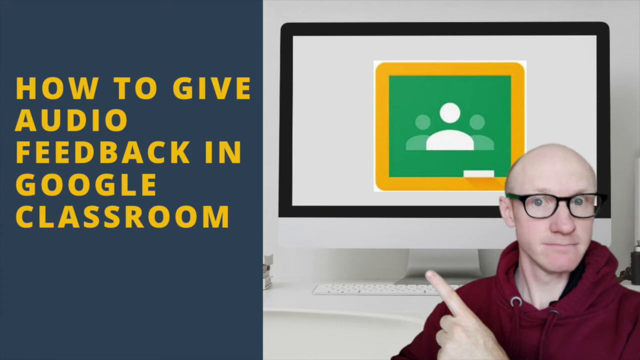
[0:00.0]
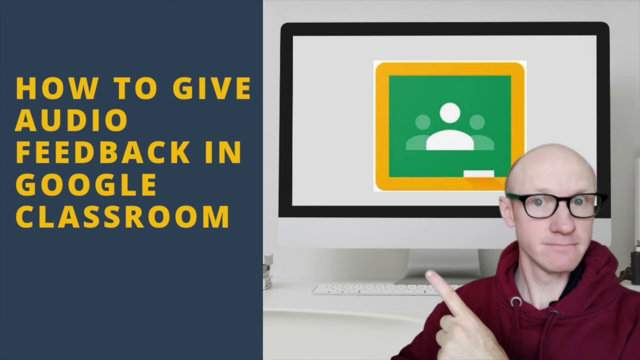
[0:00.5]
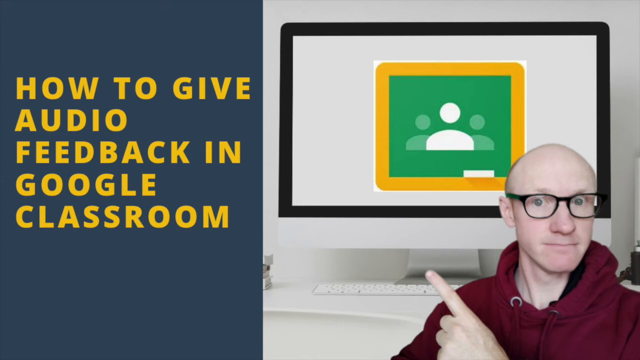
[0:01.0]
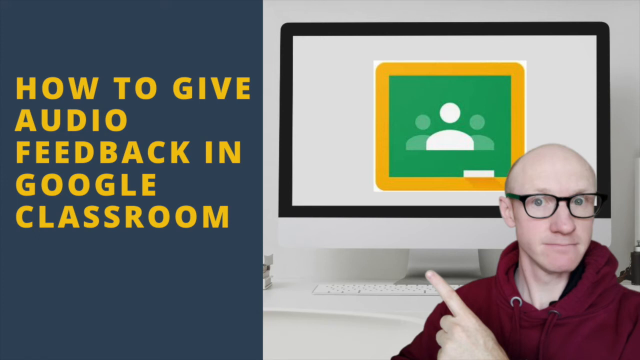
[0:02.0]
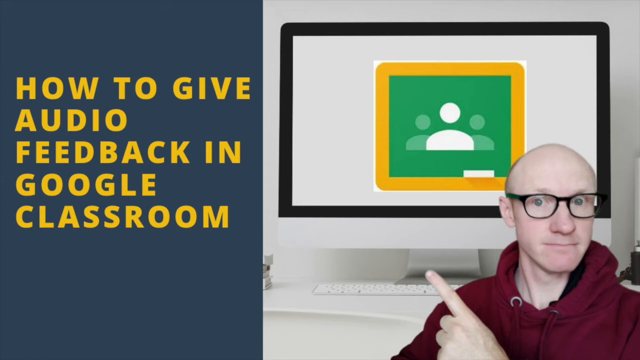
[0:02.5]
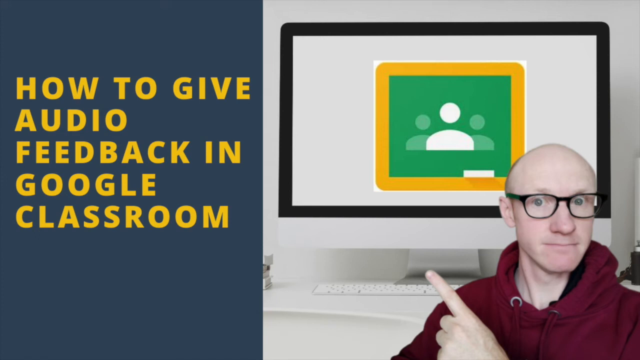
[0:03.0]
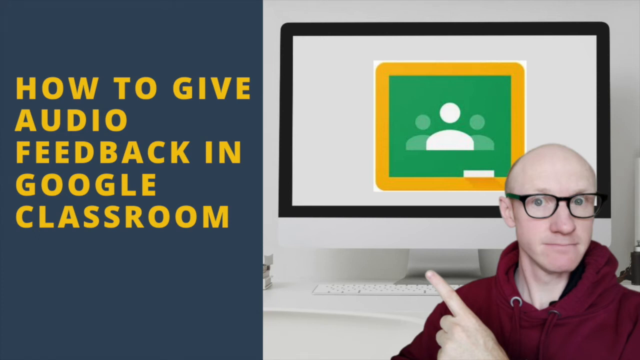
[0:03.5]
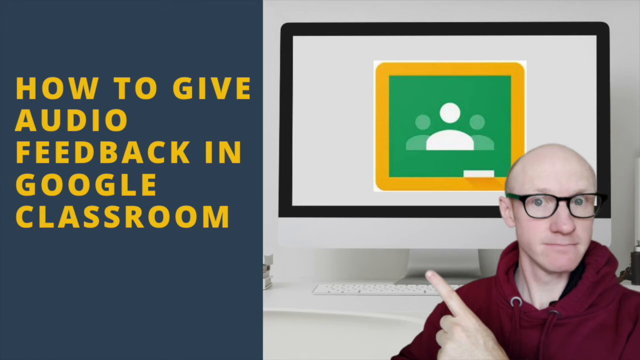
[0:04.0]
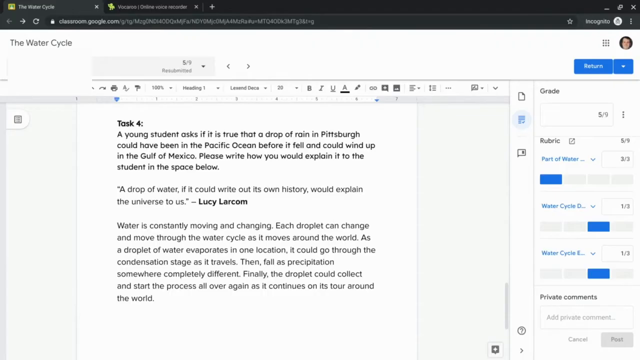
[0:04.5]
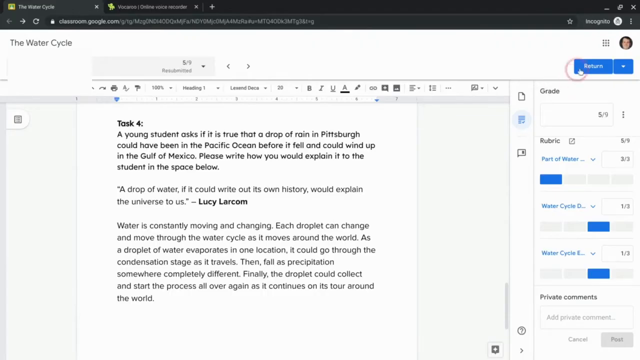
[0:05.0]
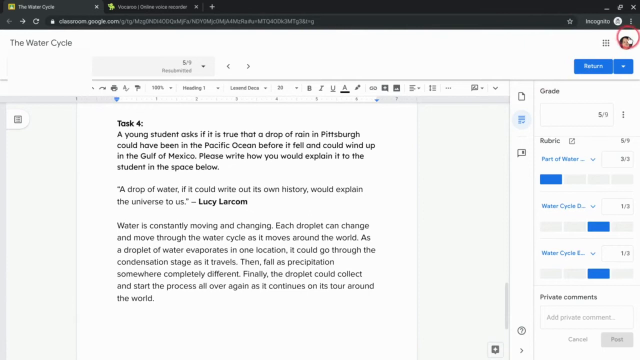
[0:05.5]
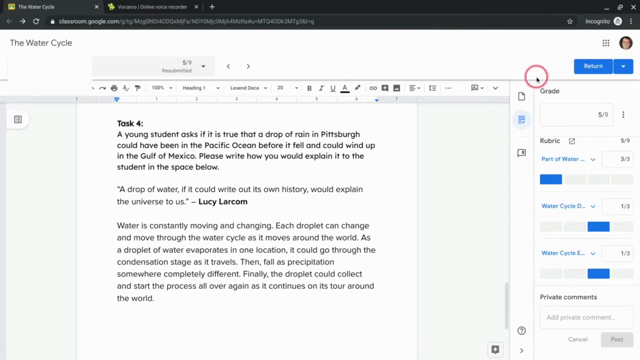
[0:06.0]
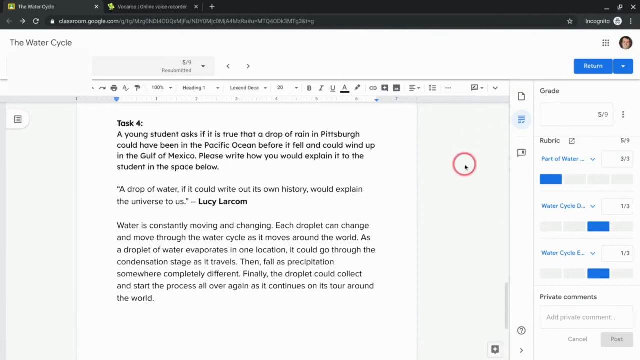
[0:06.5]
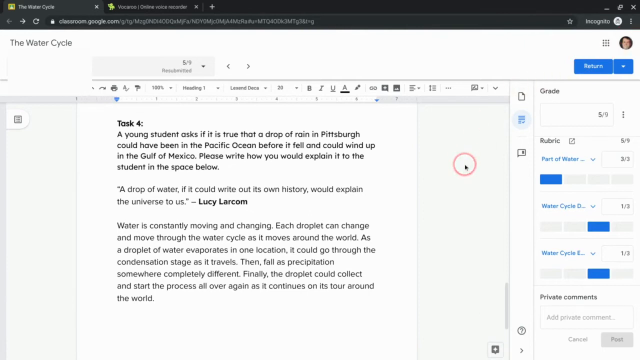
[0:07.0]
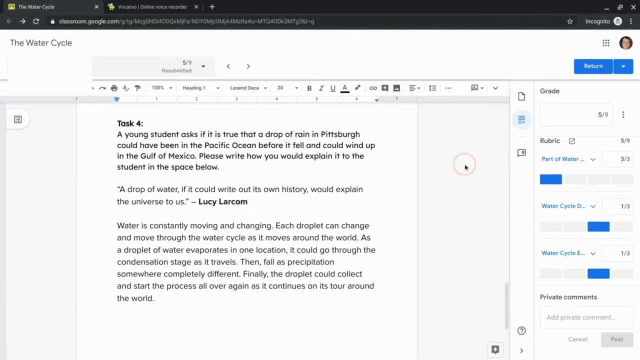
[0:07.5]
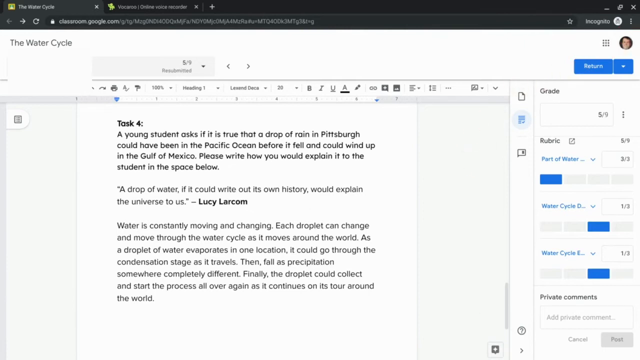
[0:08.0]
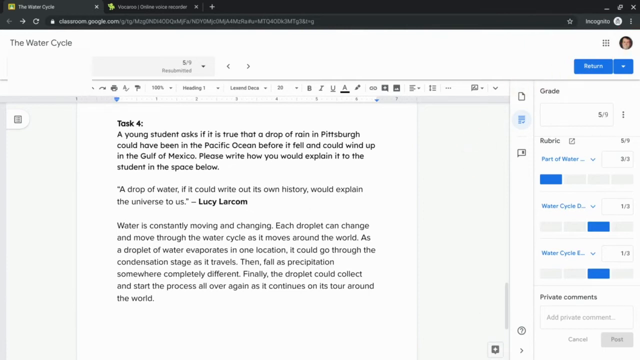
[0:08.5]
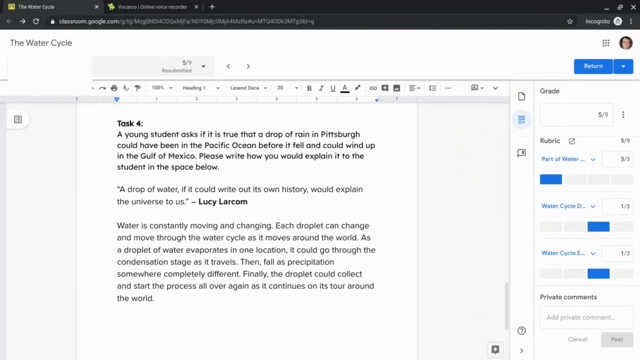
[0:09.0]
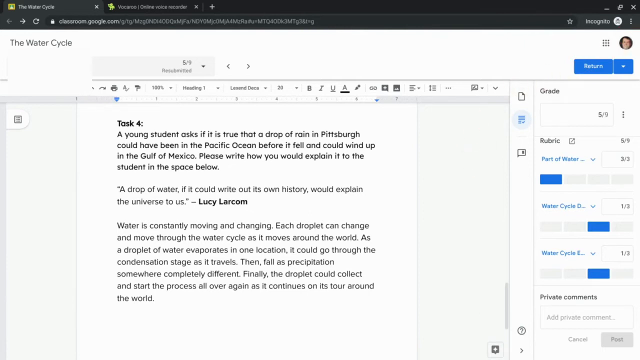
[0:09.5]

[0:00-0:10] The video opens on a static image: a bald man with glasses and blue eyes in the bottom right of the screen points at the image above him. That image is a computer screen with a blue, green and yellow icon in the middle, taking up most of the space on the screen. On the left side of the screen, large yellow text reads "How to give audio feedback in Google Classroom." Next, a text editor with a document appears. A mouse cursor with a red circle around it moves around the screen, goes up to the icon at the top right, and then moves down across the screen.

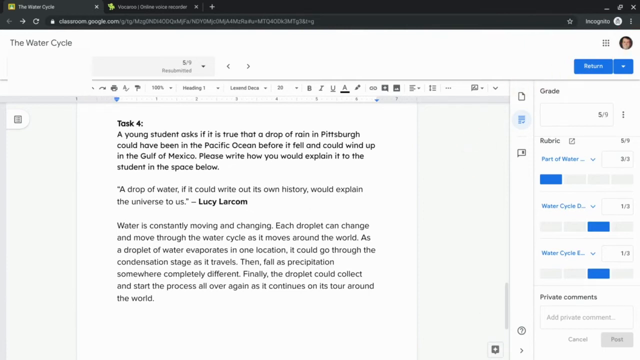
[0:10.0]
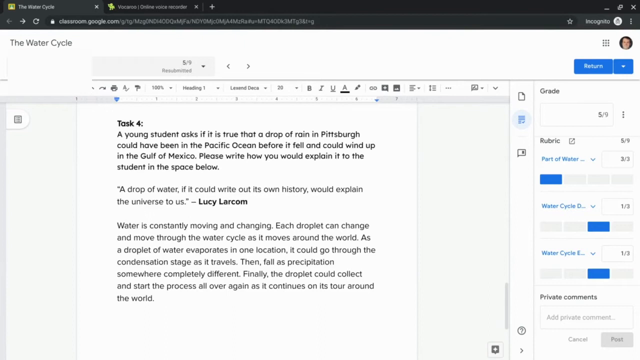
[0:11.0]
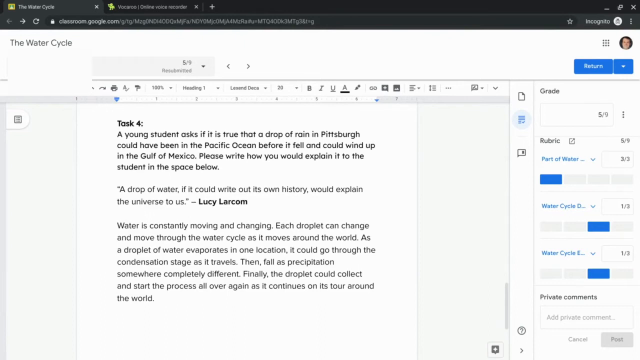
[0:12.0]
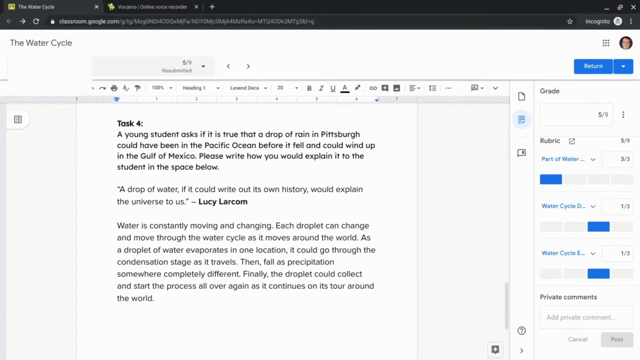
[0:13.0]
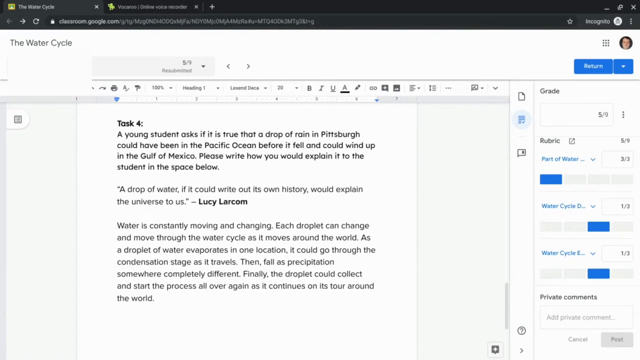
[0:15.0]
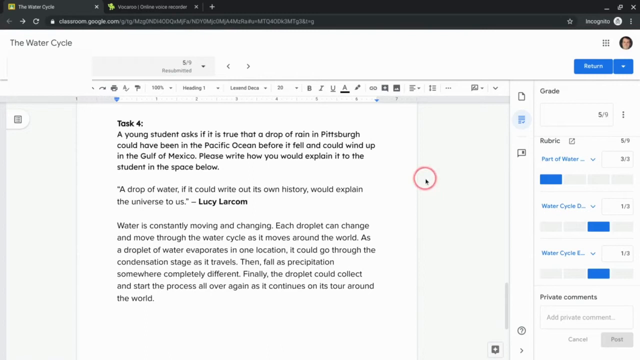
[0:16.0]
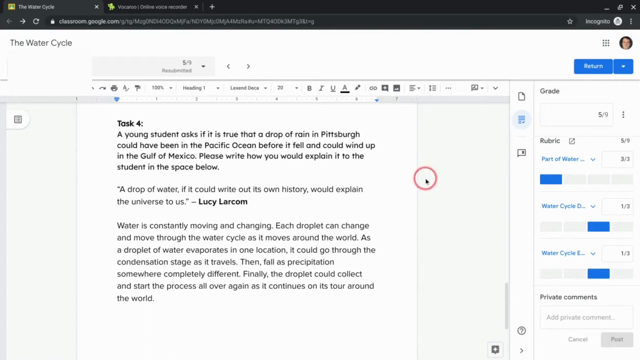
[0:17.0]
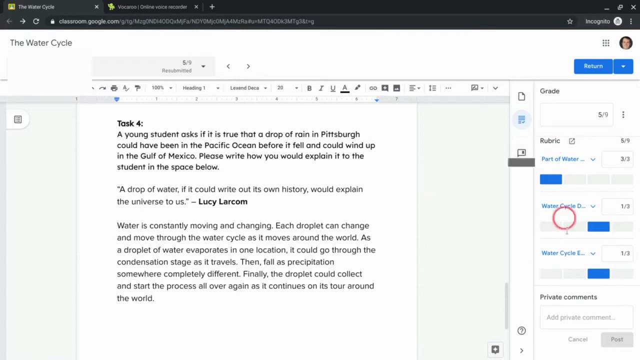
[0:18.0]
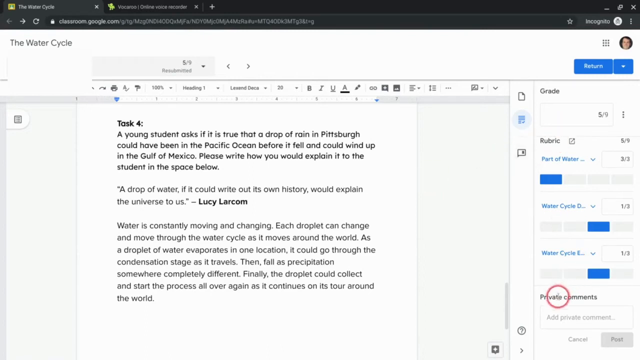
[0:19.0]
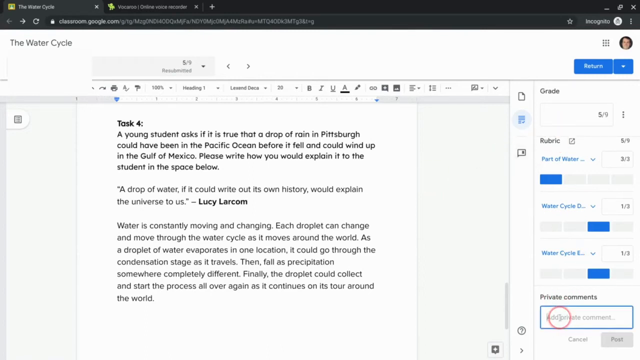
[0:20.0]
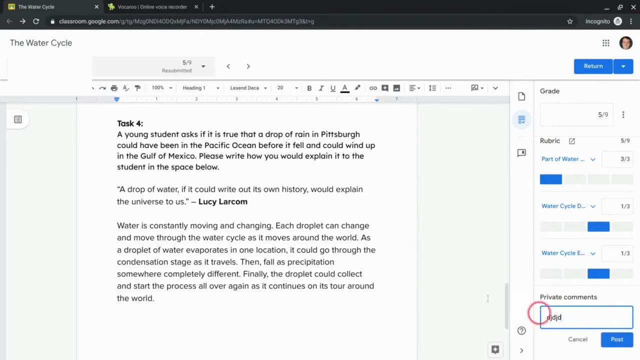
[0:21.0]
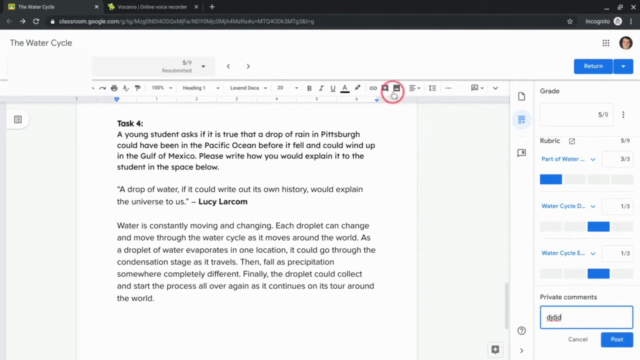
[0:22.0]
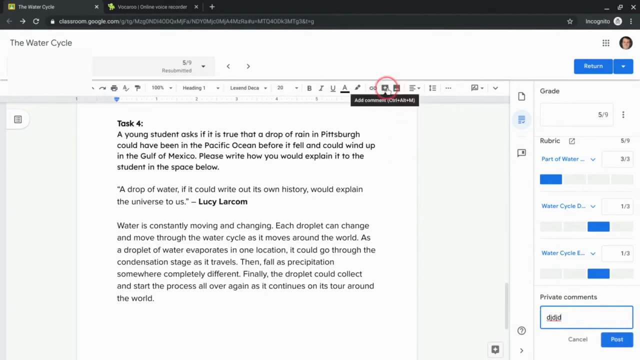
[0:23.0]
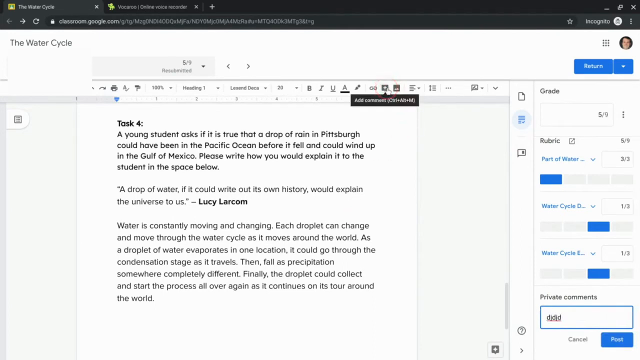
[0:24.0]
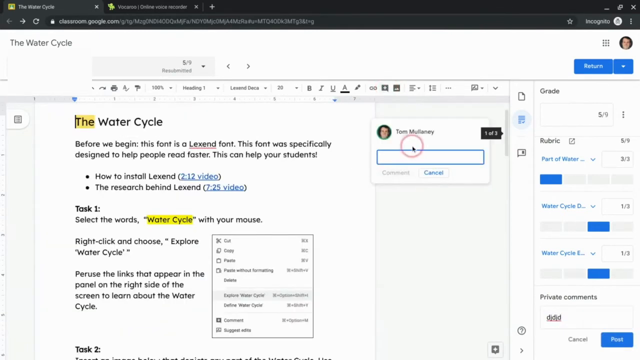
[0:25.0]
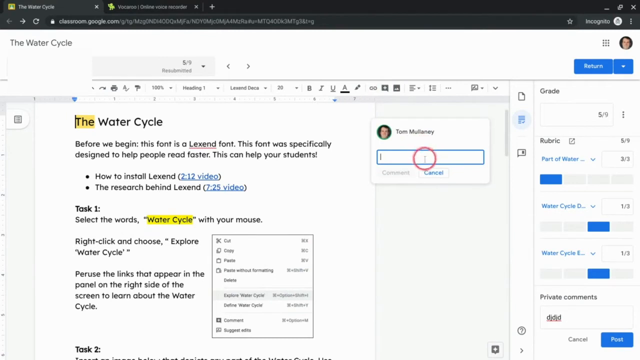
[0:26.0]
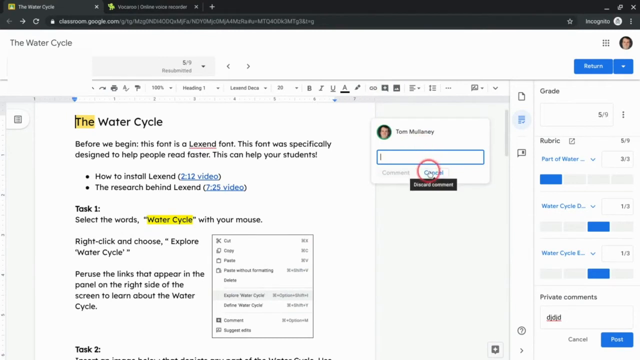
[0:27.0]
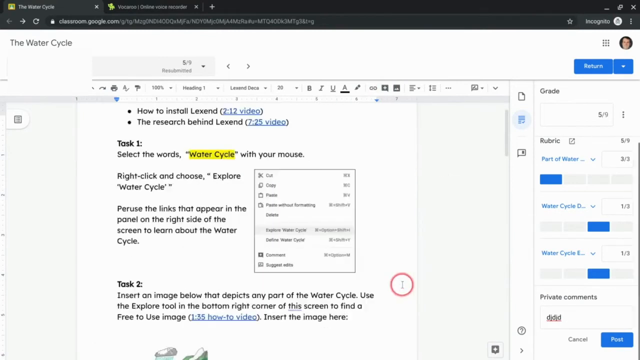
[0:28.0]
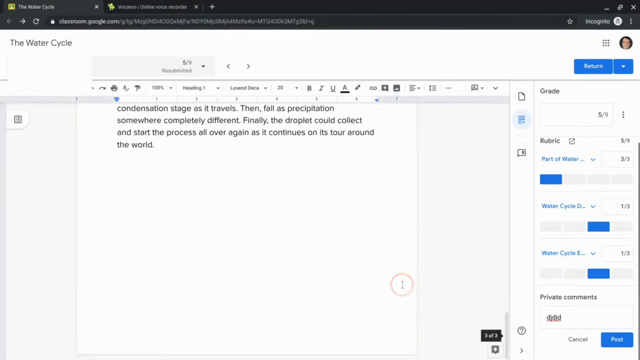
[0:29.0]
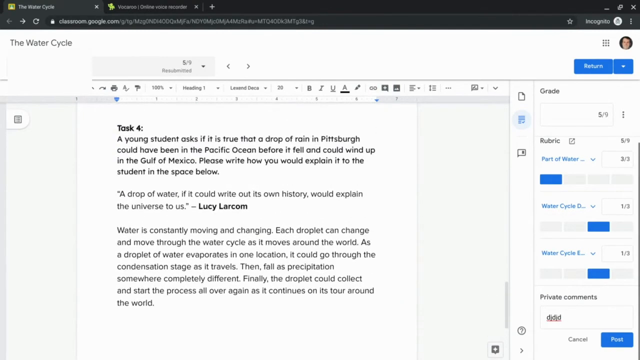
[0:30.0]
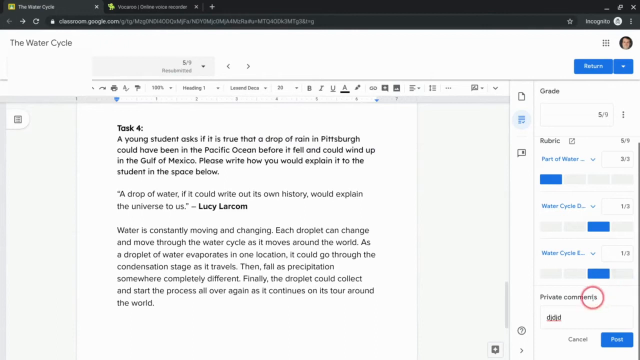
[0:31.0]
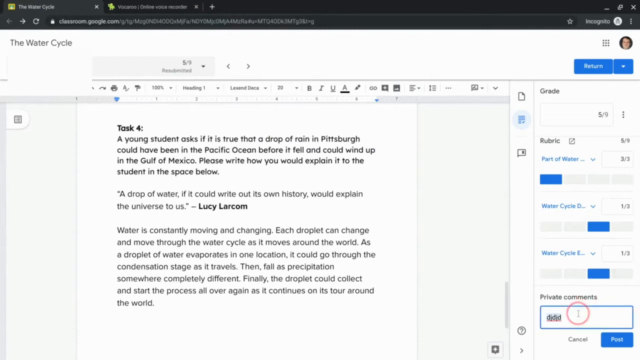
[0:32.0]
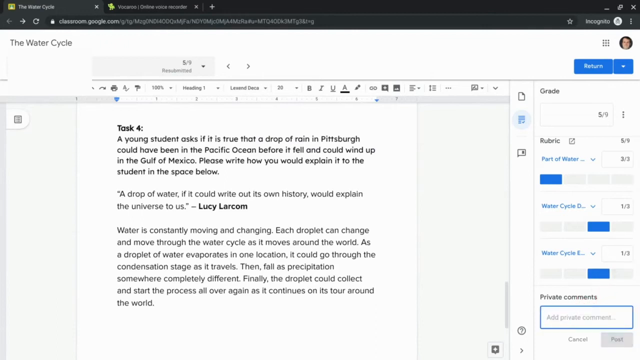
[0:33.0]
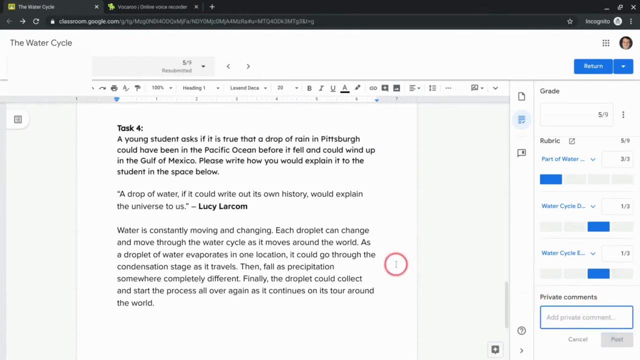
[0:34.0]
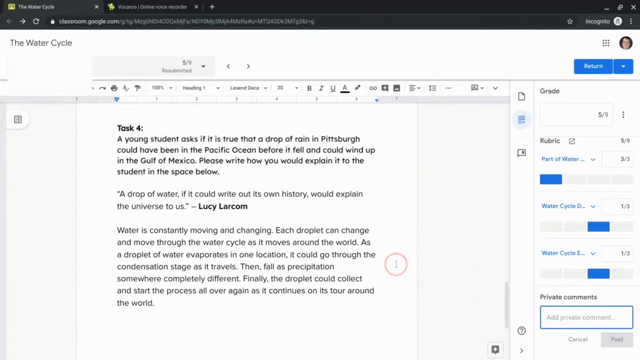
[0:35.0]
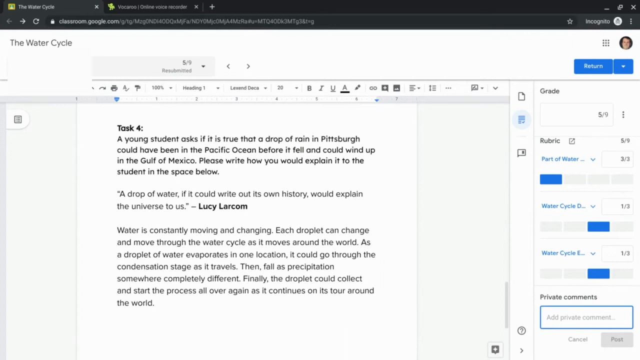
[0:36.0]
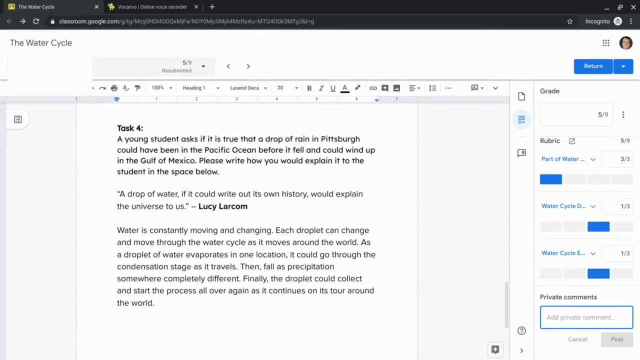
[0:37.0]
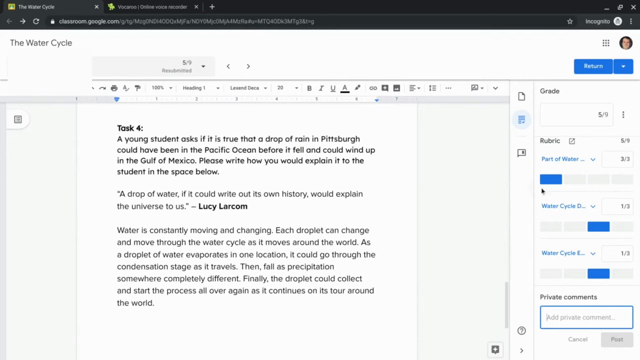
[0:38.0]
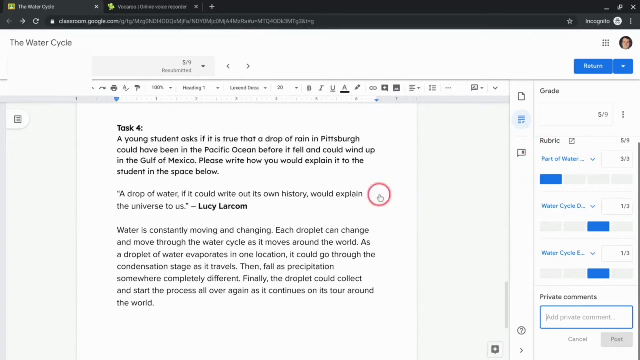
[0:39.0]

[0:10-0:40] The same text editor and document remain on screen. The mouse appears on the right side of the screen and moves to the right side of the document editor, to what looks like a toolbar-like panel, where it clicks a box that says "Previous Comments." A comment is typed with the letters "DJ" repeating, and as the mouse moves up, it clicks "Add Comment" on the top toolbar. On the right side of the screen, a name appears with an icon and another open box to type in. The mouse moves down slightly and clicks the option to discard the comment. The view scrolls down through the document and then back up to a section beginning "Task 4" with text in multiple paragraphs. The mouse moves around, the red circle trailing behind it in a circle-like motion.